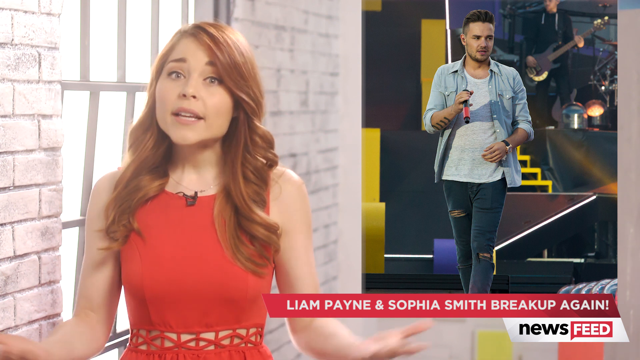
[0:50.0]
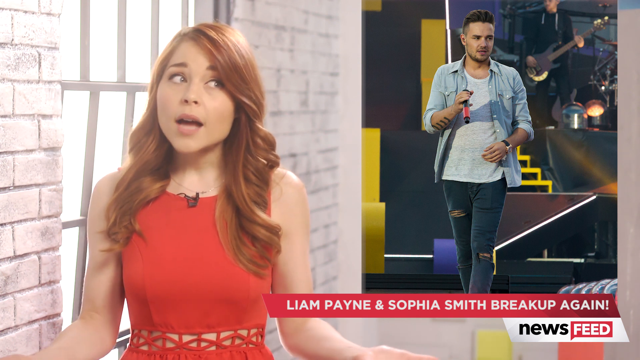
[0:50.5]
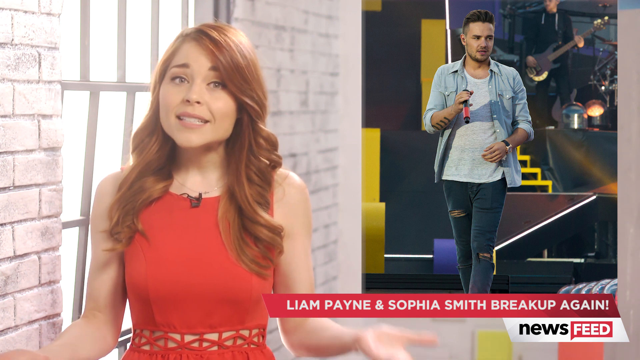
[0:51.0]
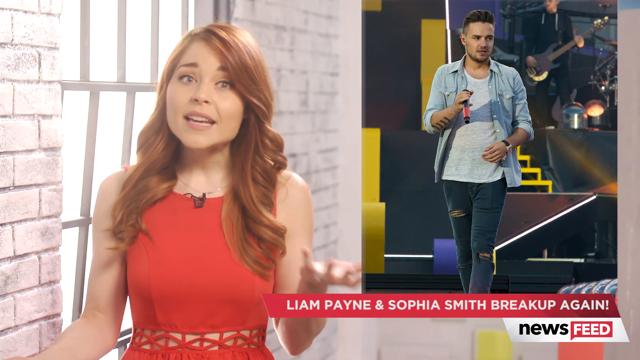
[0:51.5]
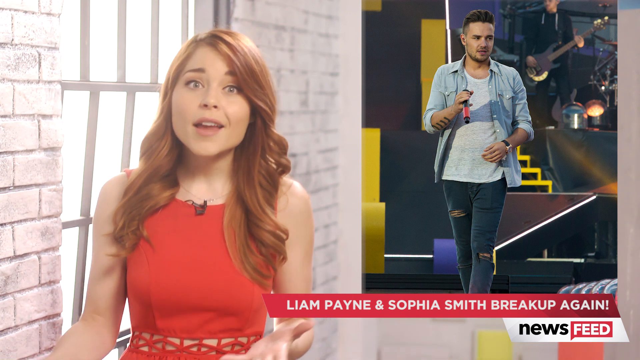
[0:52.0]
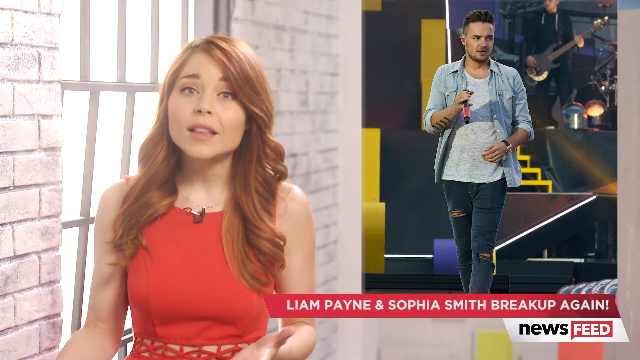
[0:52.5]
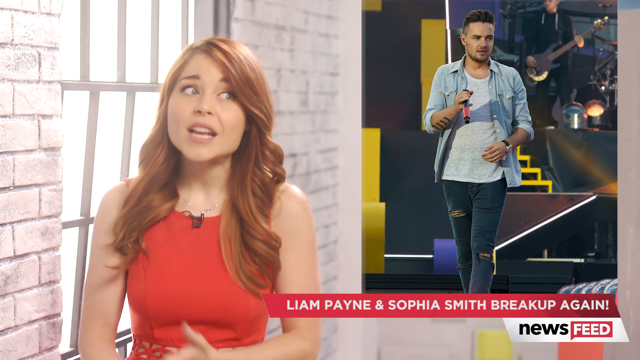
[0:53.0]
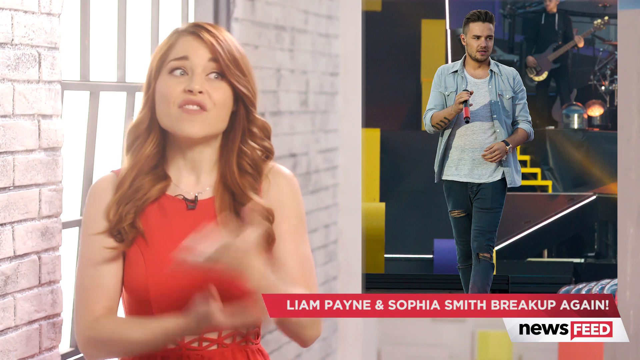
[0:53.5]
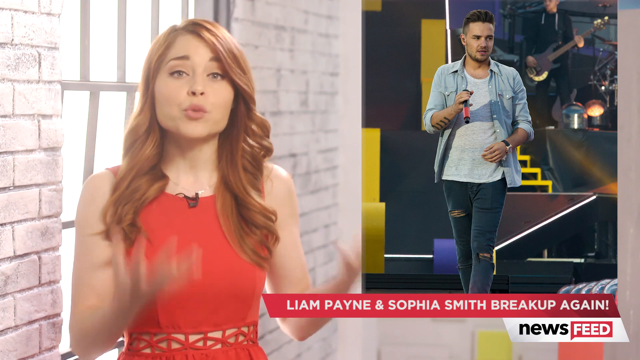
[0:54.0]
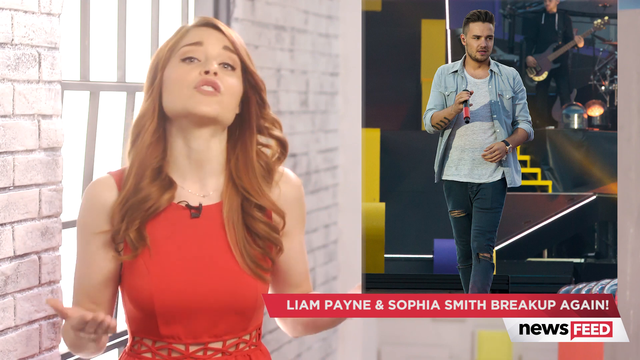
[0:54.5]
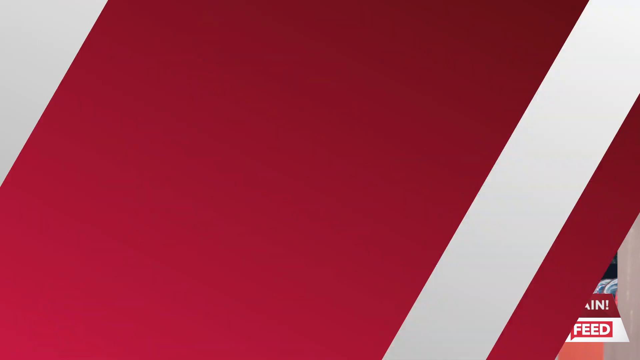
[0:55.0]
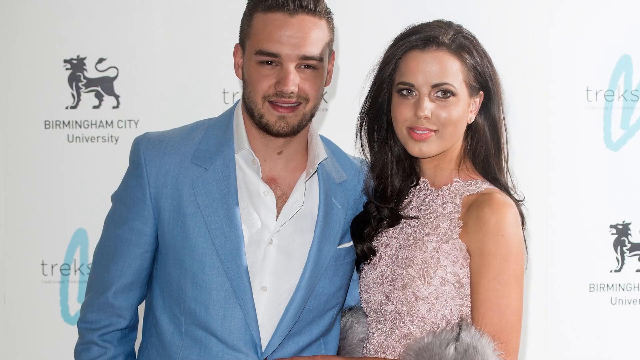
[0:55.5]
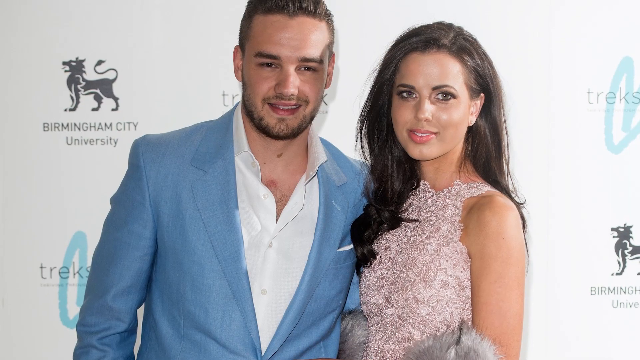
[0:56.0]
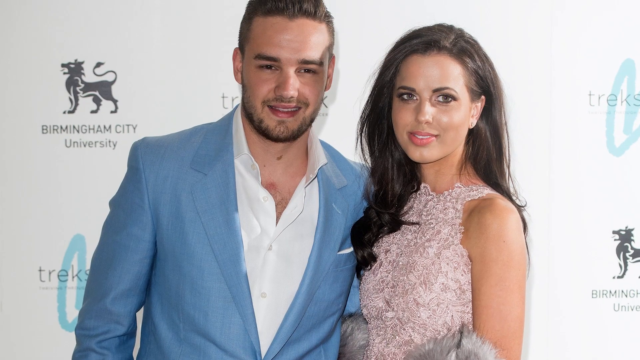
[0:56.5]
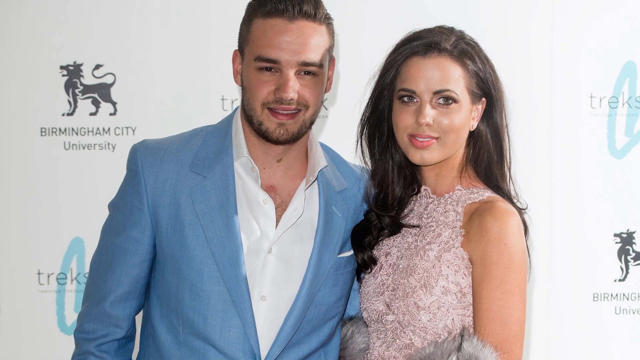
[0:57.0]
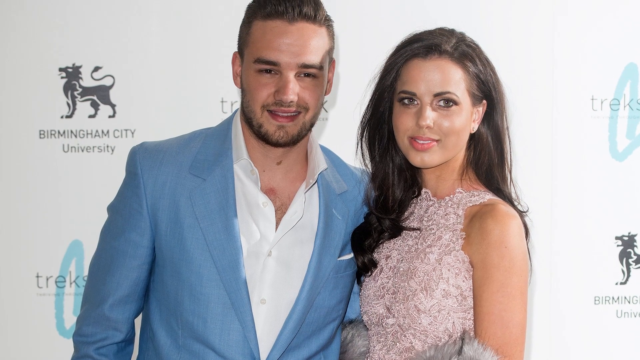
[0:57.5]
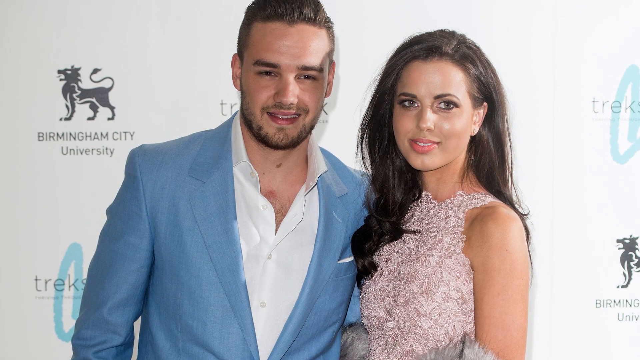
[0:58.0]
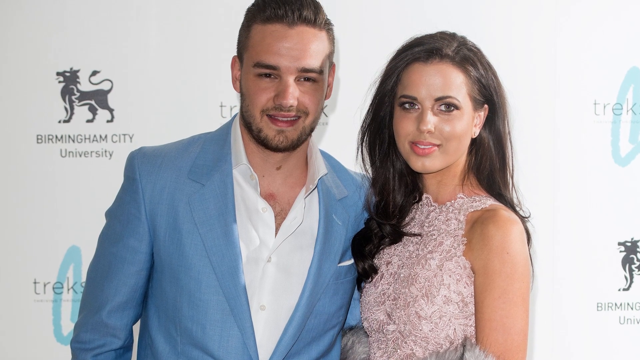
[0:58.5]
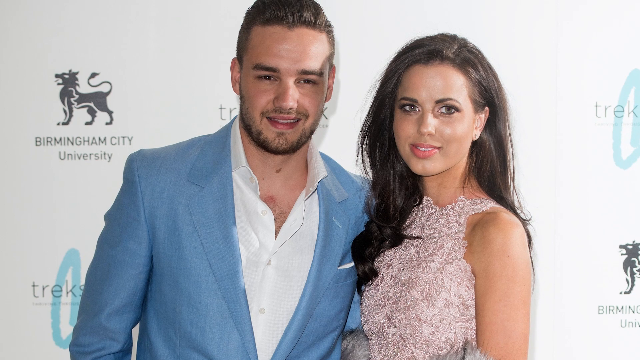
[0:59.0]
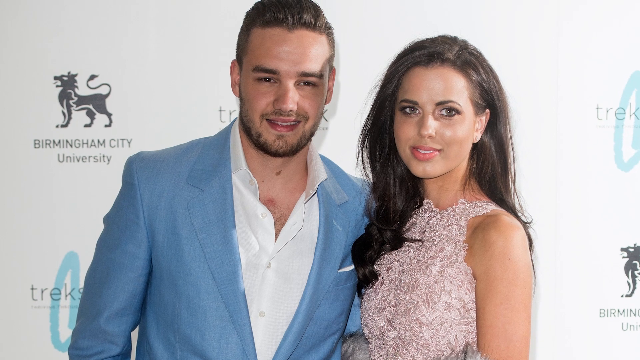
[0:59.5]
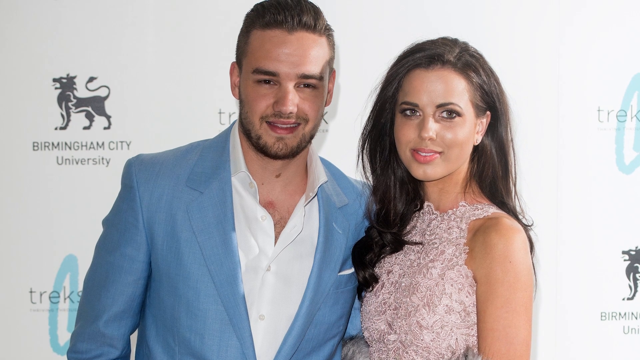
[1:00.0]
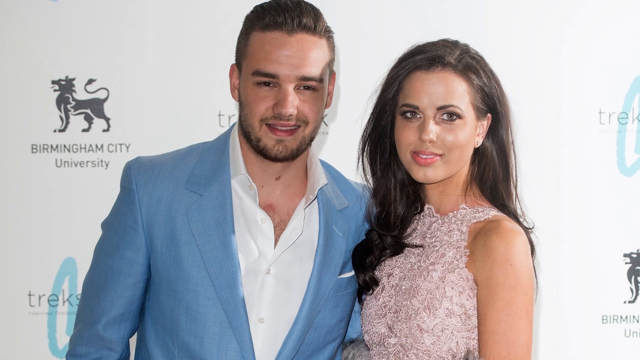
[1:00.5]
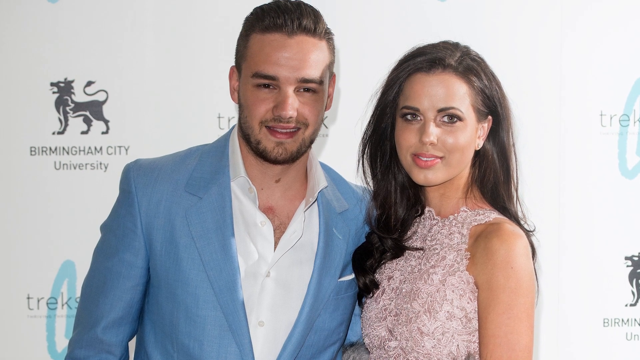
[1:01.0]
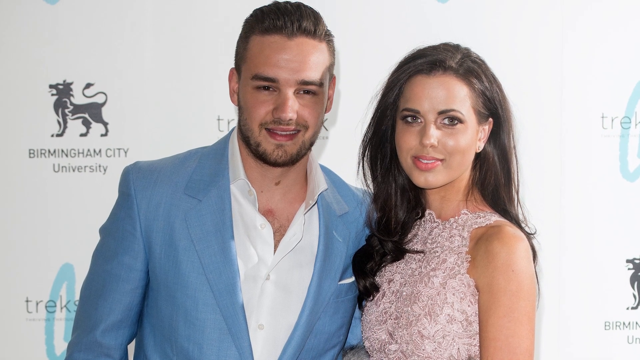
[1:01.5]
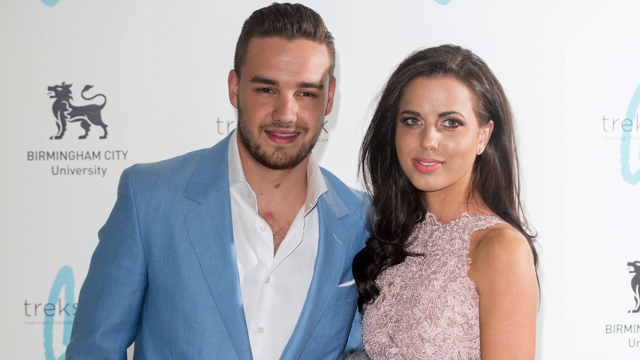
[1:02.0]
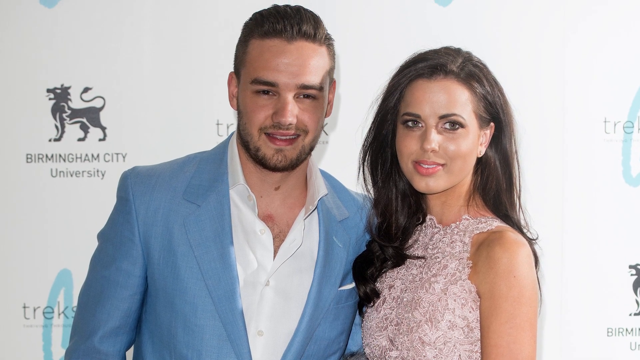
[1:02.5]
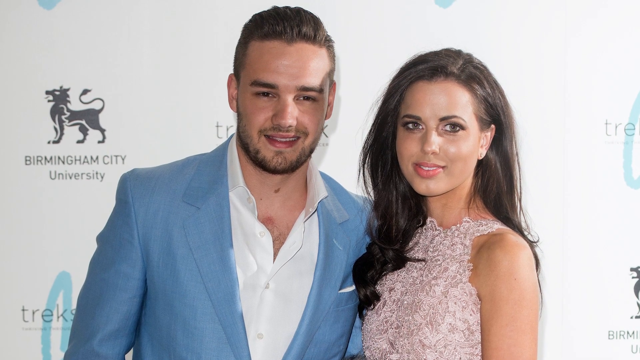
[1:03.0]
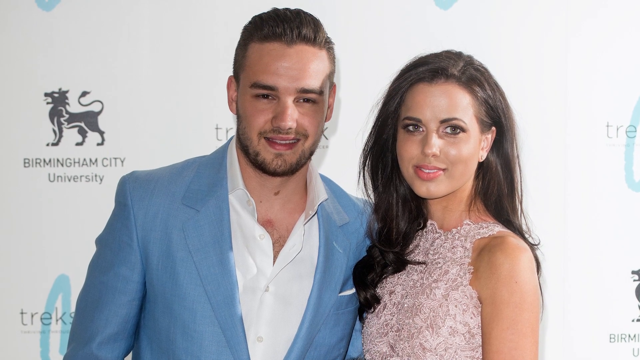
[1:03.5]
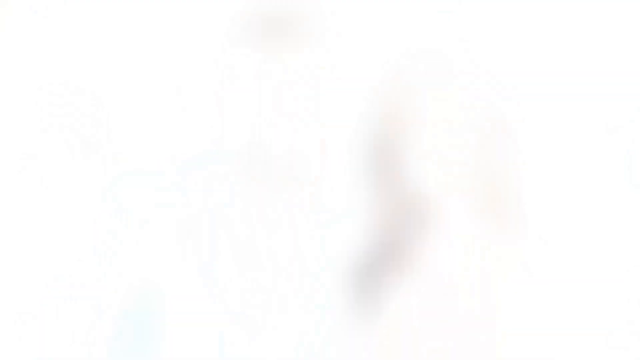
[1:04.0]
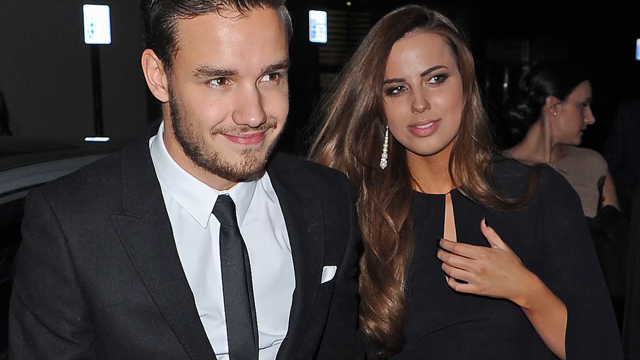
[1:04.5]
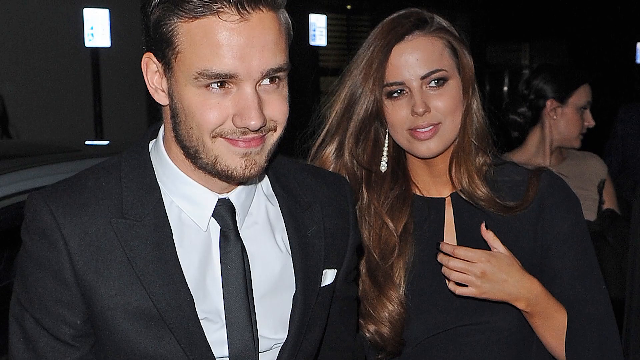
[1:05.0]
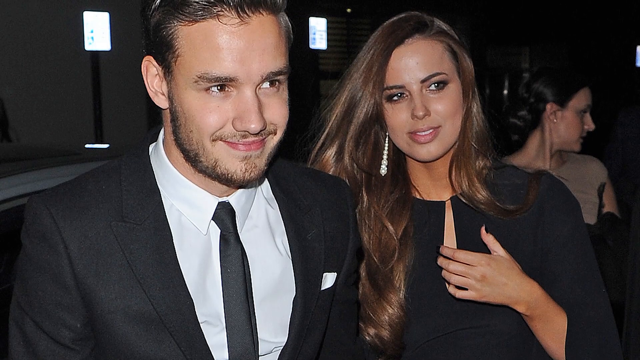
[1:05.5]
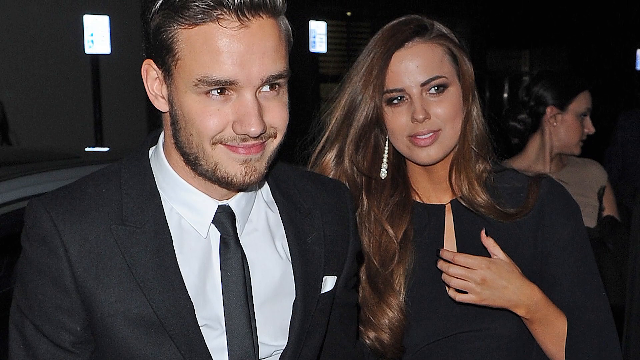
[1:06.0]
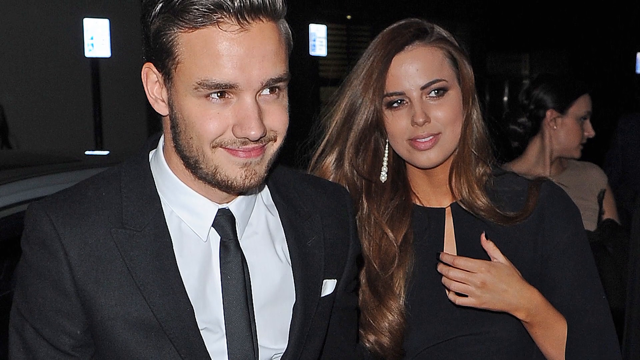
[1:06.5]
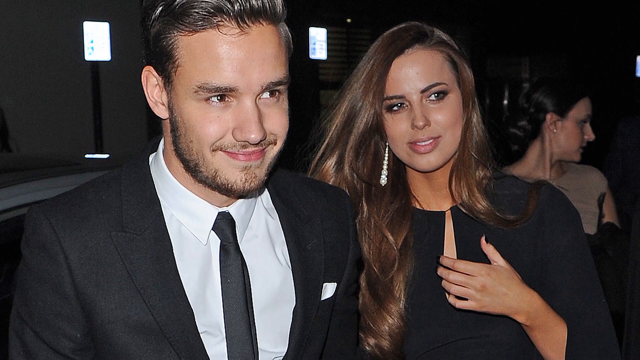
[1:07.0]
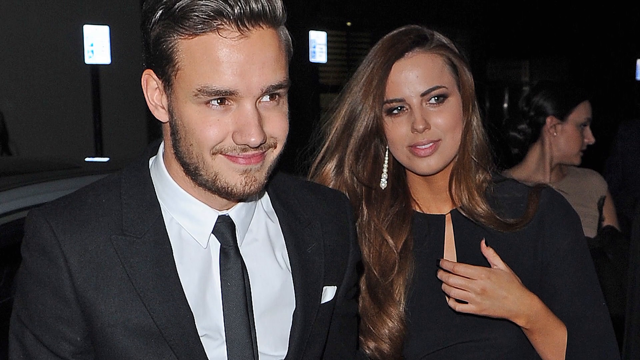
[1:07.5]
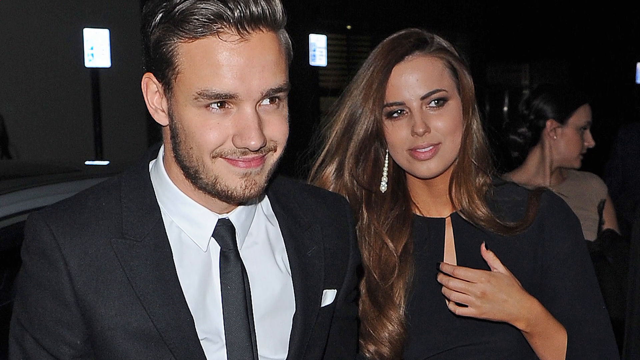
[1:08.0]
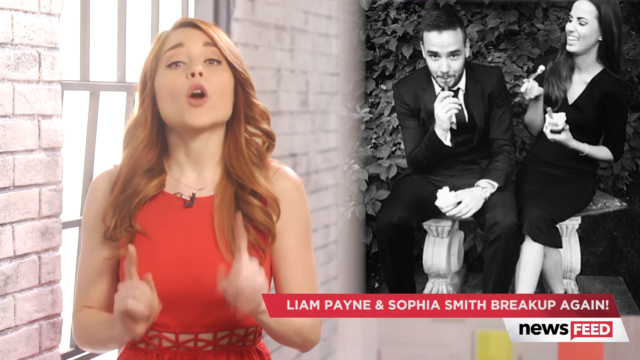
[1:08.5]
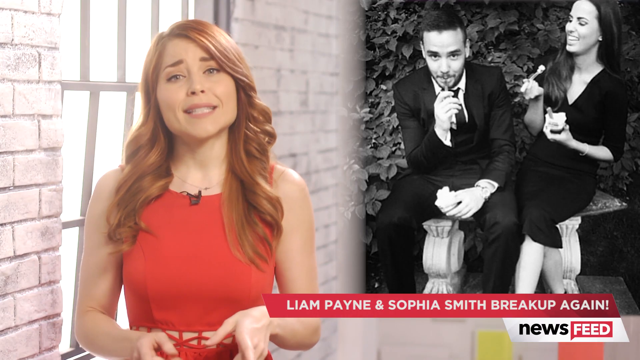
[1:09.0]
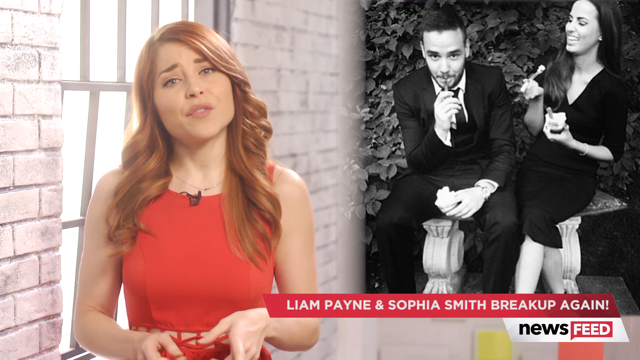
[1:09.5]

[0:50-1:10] The news reporter, wearing an orange dress and with long brown hair, appears with a picture on her left side of a man on a stage holding a mic. She is wearing a powder blue shirt along with a white t-shirt and black jeans. The background where the man is looks like a stage, with a man behind holding a guitar and other music equipment around the place. Below the picture, text reads "Lilliam, Piney and Sophia Smith break up again". The video changes to the same couple in different clothing: the man wears a powder blue suit with a white shirt and is smiling, and next to him is a lady with dark brown hair and earrings. Their background is white with a drawn animal, and text reads "birmingham City, University".